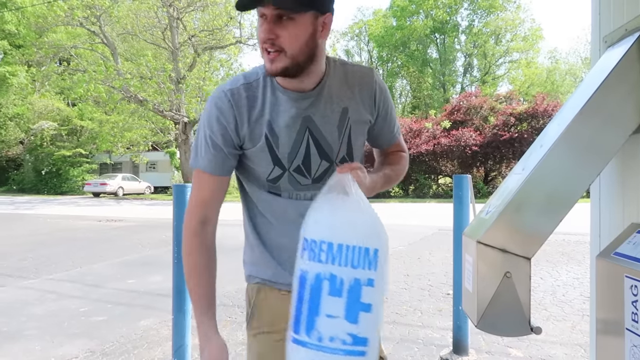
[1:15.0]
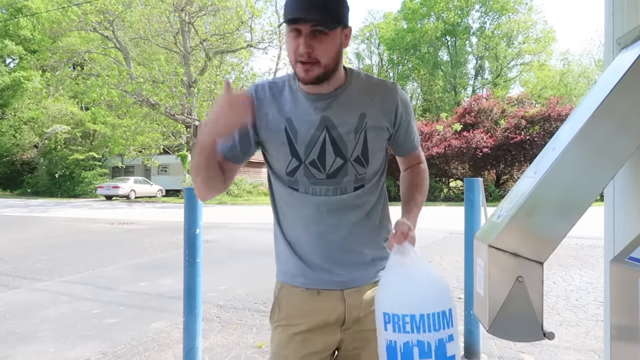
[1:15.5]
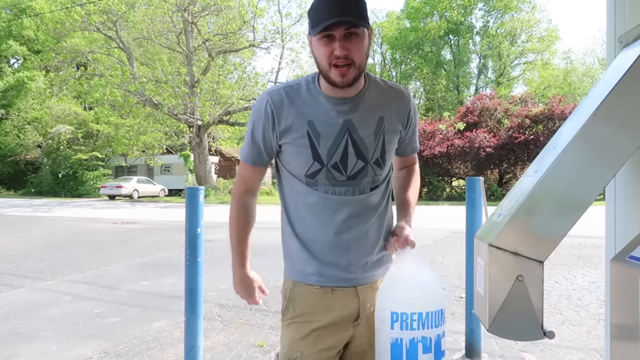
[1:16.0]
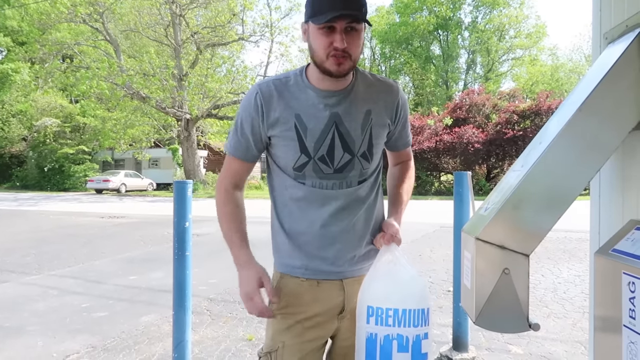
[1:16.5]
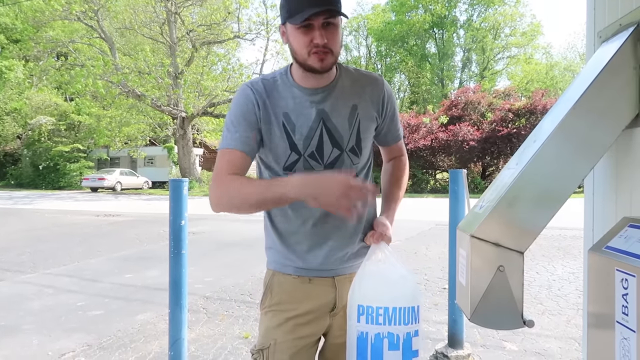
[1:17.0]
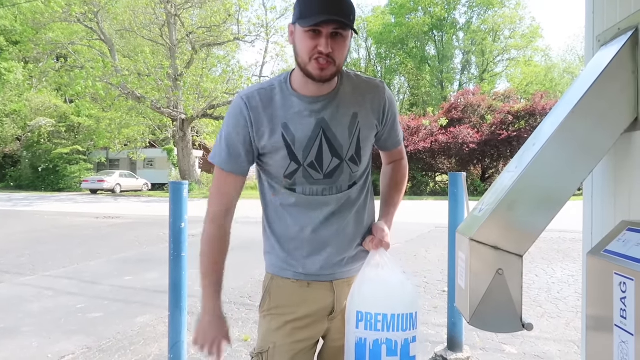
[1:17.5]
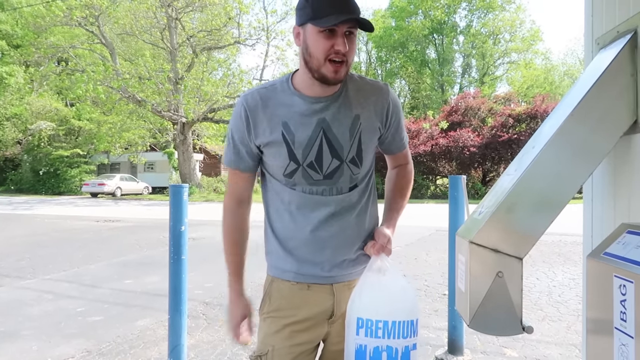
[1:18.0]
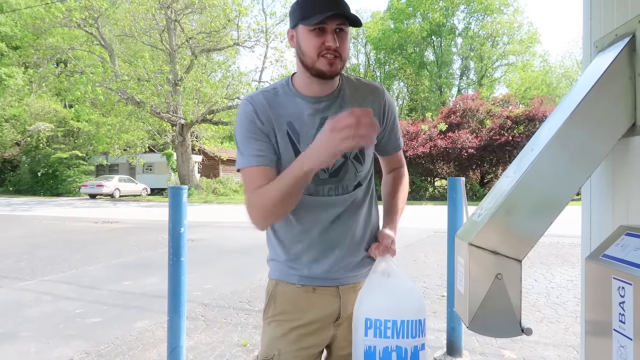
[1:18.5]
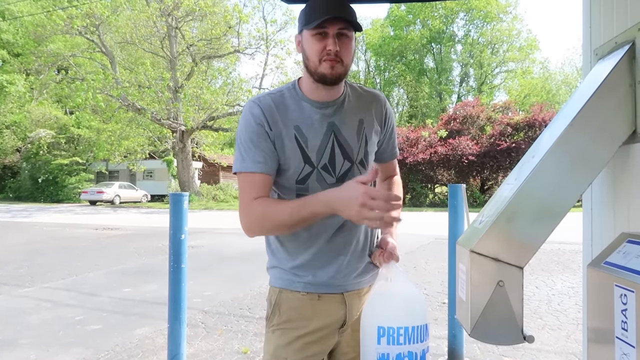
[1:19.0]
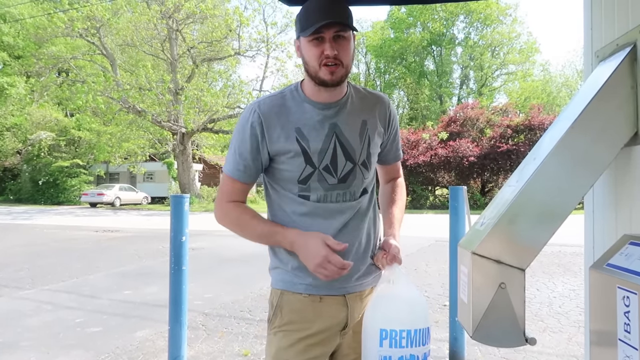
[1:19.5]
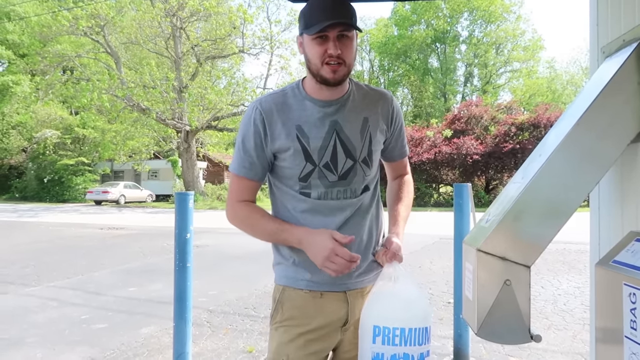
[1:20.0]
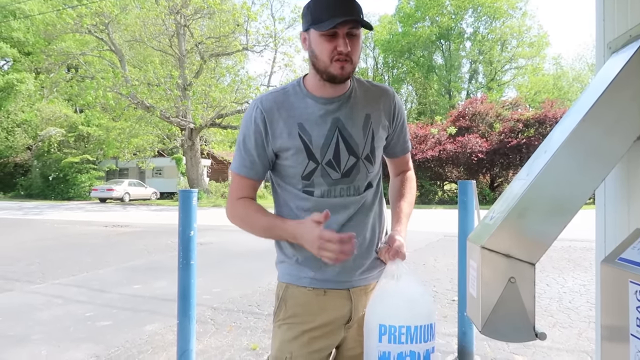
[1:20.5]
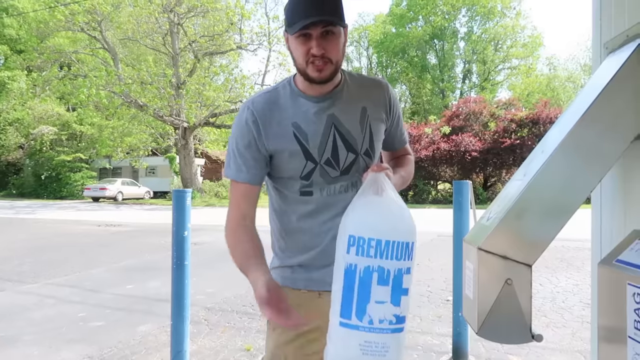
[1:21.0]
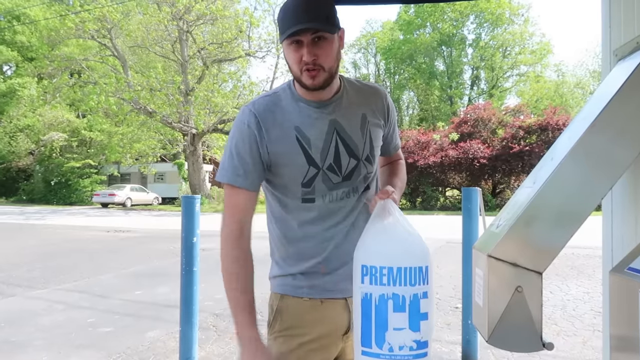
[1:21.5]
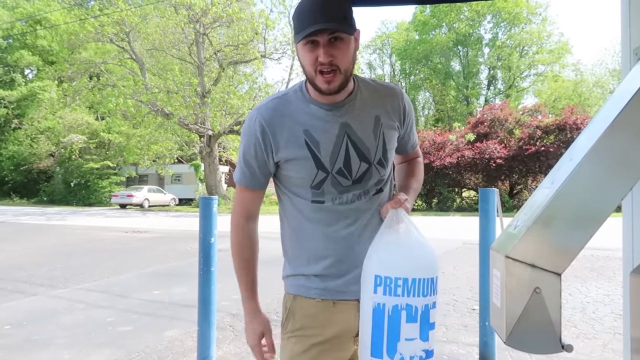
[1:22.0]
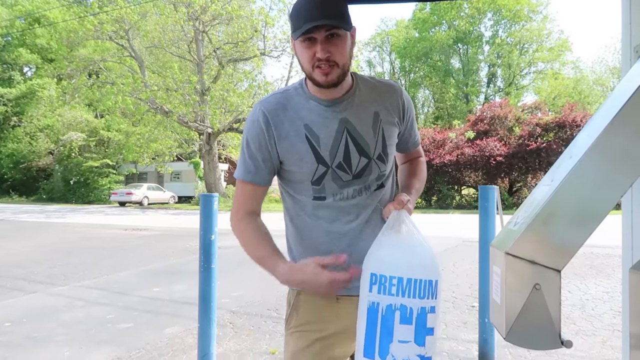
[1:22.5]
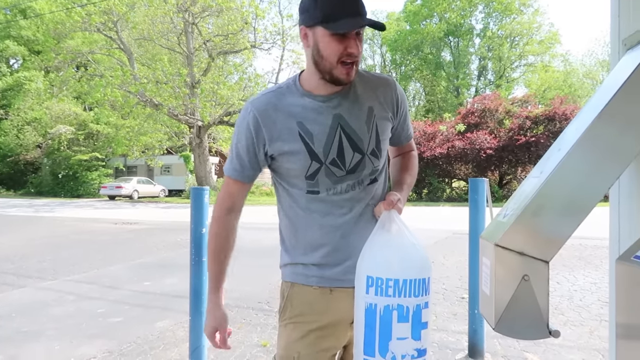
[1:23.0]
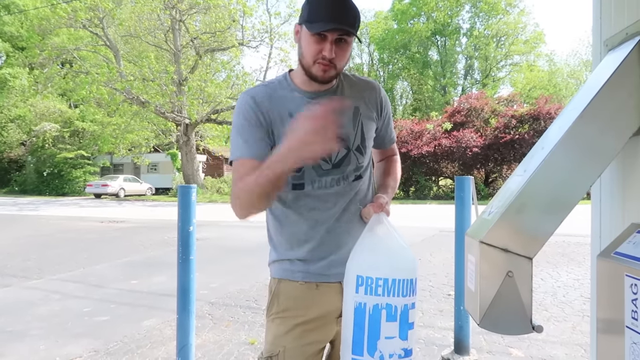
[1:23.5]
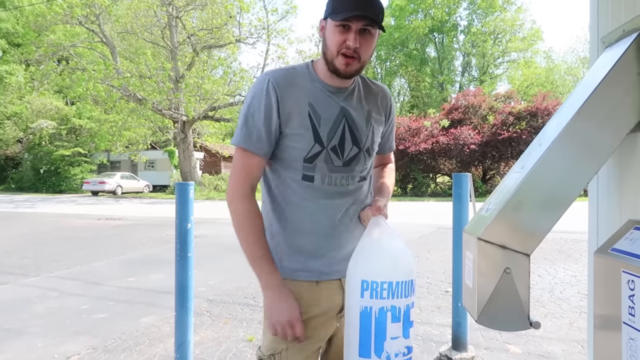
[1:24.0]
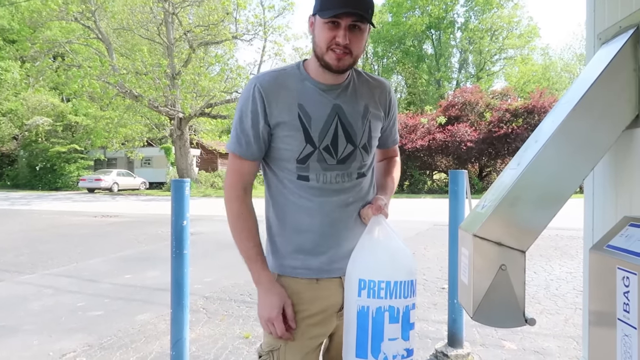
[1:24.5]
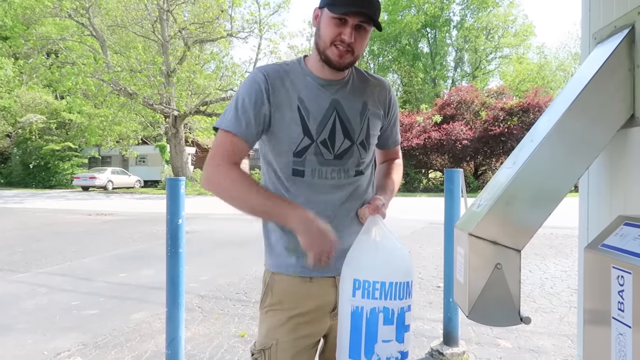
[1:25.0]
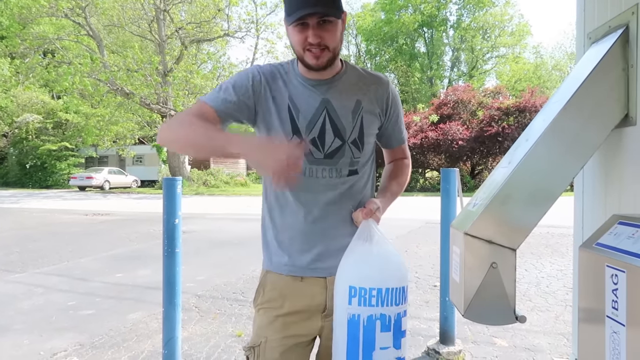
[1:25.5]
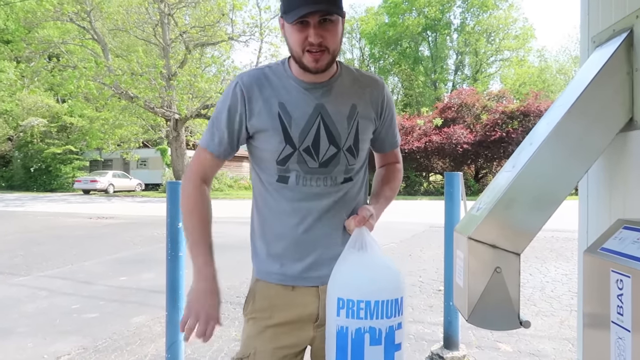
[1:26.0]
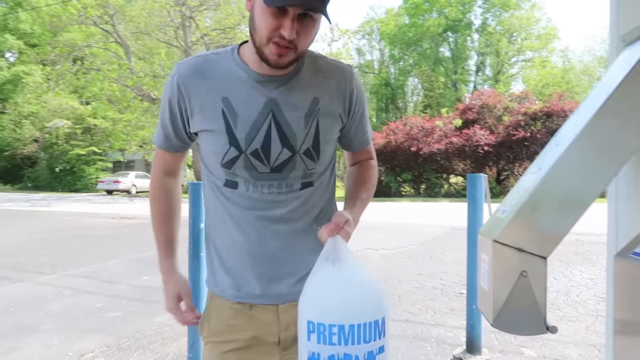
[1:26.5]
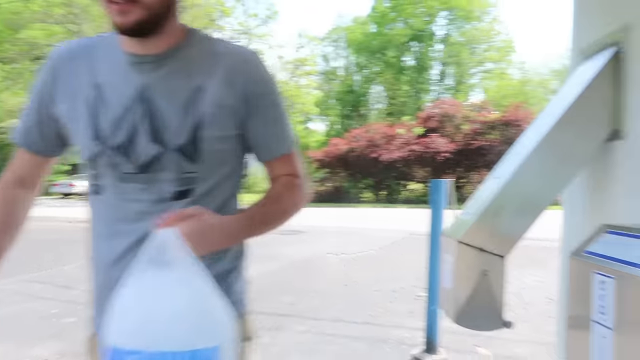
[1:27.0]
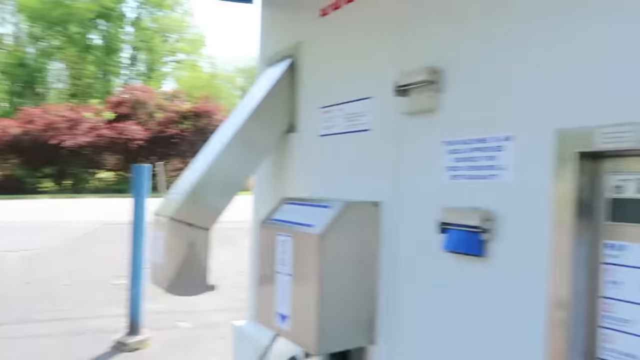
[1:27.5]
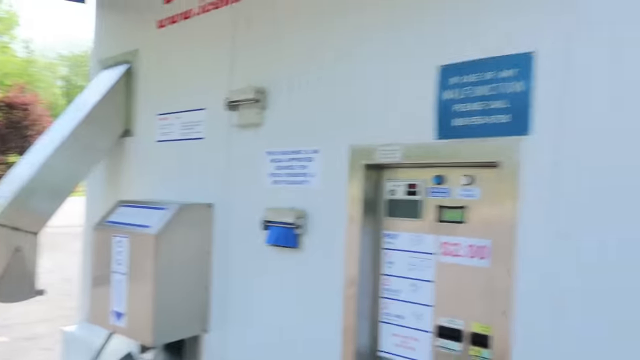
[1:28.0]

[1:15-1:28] A man stands outside next to the ice vending machine, holding a bag of ice with his left hand; the bag says "premium ice" in blue. He wears a grey t-shirt, a black cap and tan shorts, and has light skin and a dark brown beard. He talks and gestures with his hands as he speaks. He points behind him, looks off to the right, and walks off. The camera points to the vending machine again. The background is a residential street in daytime, with a car parked in the driveway of a brown house. There are a lot of trees, tall green trees, and some small trees with reddish leaves.